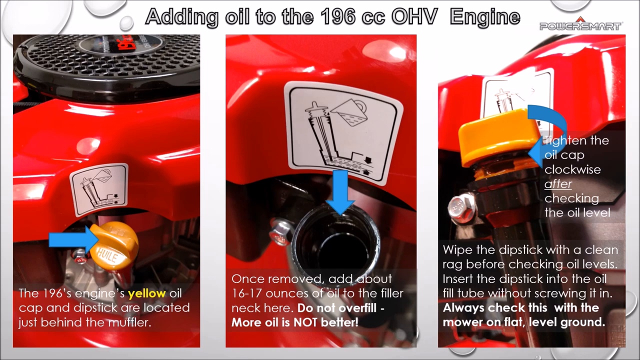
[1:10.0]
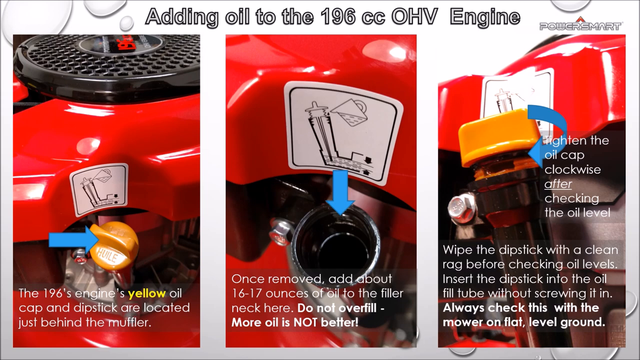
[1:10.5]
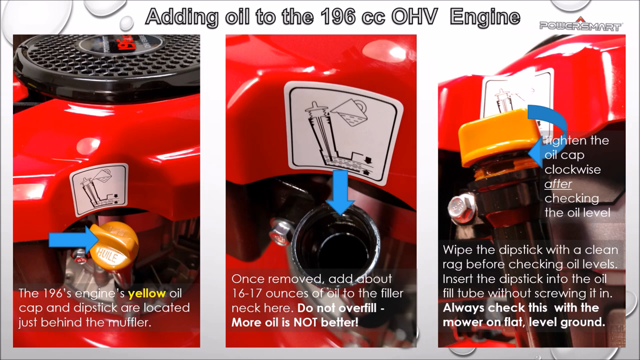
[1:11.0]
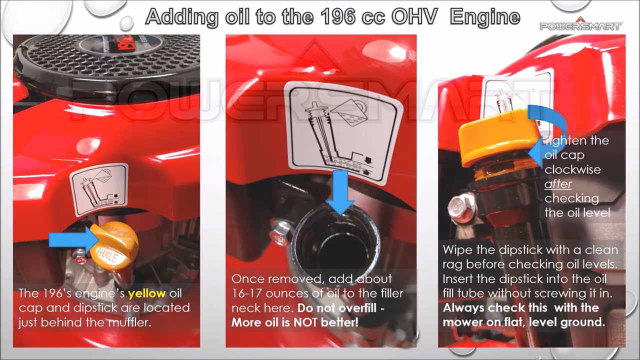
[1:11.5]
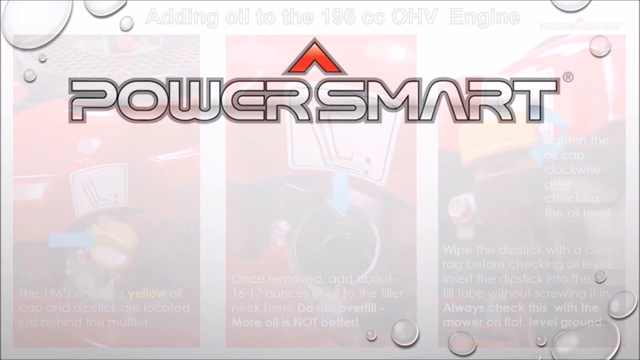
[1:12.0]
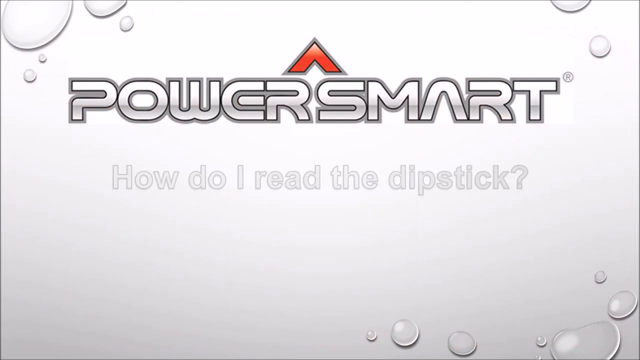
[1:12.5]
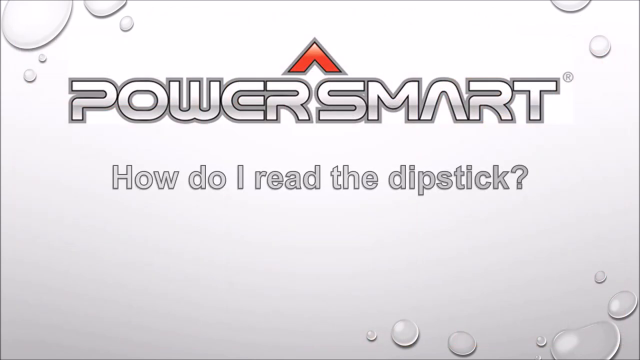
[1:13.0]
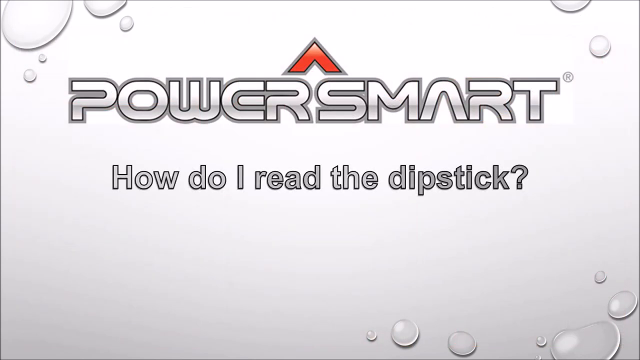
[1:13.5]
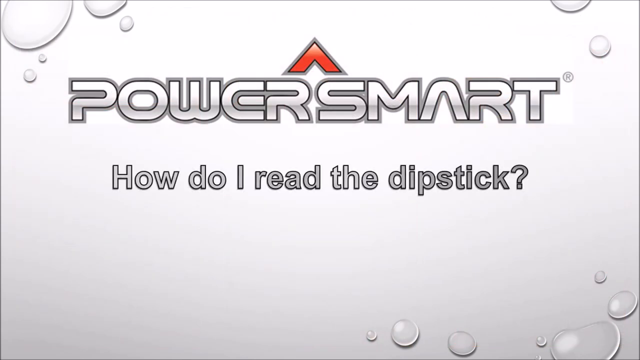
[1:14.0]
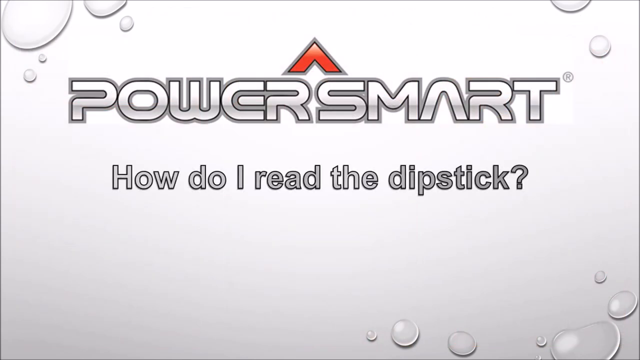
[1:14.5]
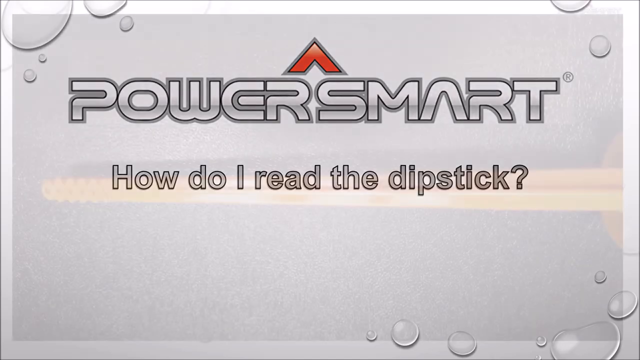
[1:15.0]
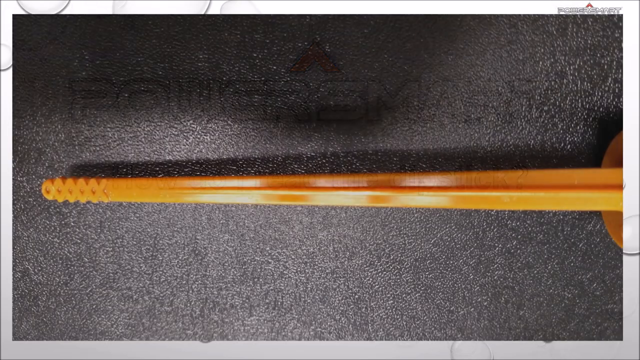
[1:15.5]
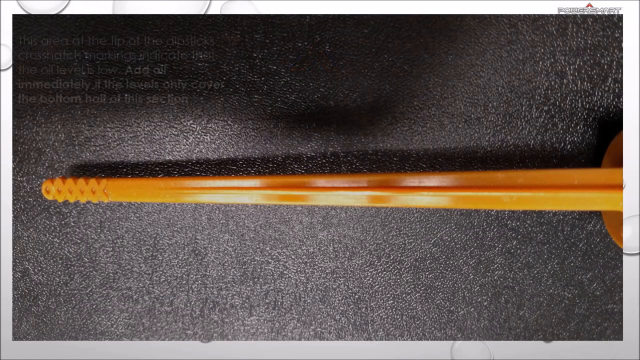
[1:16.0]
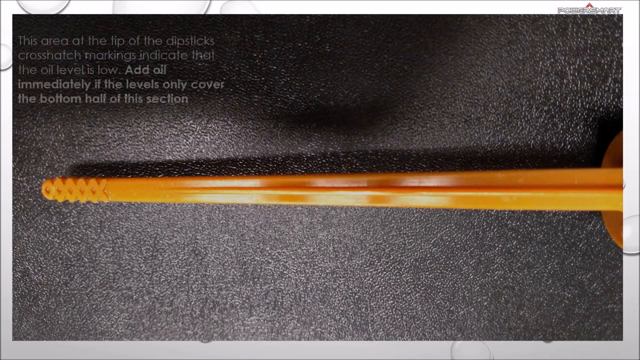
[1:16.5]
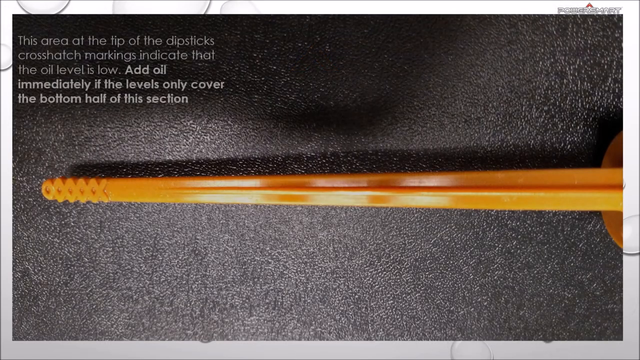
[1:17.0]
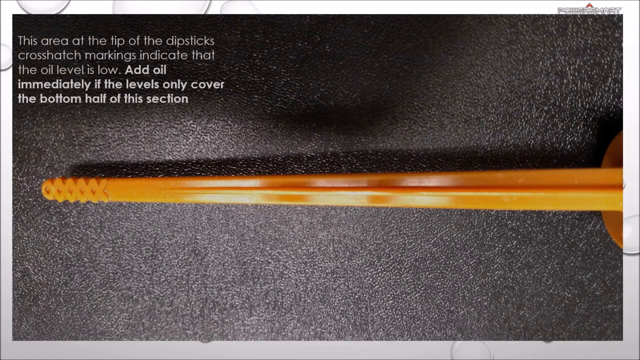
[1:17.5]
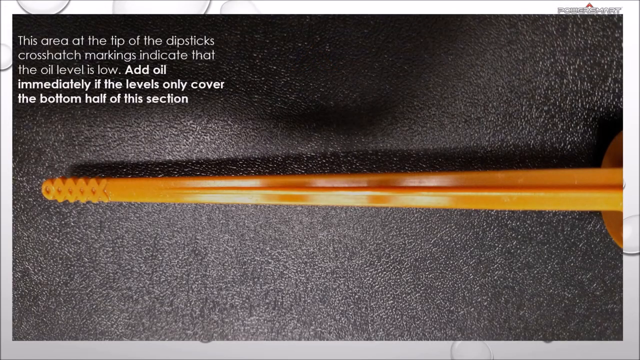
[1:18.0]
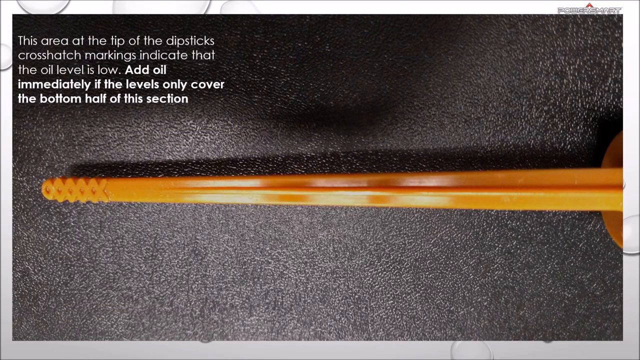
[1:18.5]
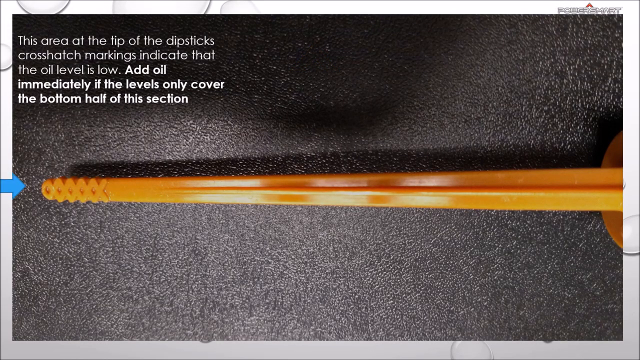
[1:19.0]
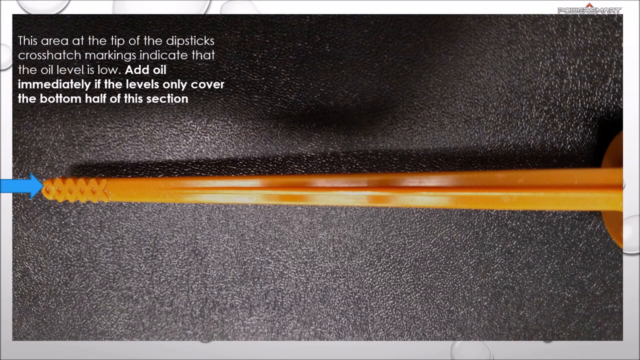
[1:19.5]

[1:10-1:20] A transition leads to the PowerSmart logo with a red triangle on top, on the white background with white bubbles around it. The words below the logo say "How do I read the dipstick?" The scene then changes to an orange dipstick on a rough black surface, with the PowerSmart logo at the top right. At the top left the words "this area at the tip of the dipstick's crosshatch mark indicates the oil level is low. Add oil immediately if the levels only cover the bottom half of the section" appear. A blue arrow comes from the left side of the video, pointing at the tip of the dipstick.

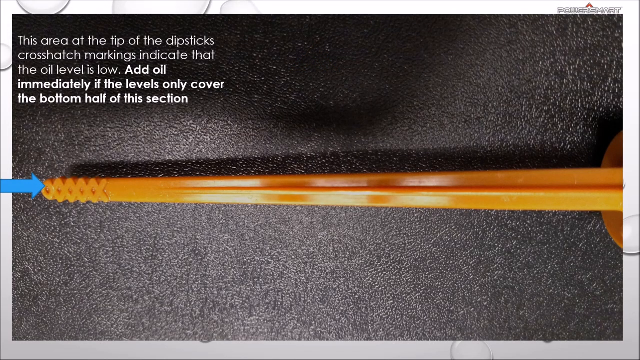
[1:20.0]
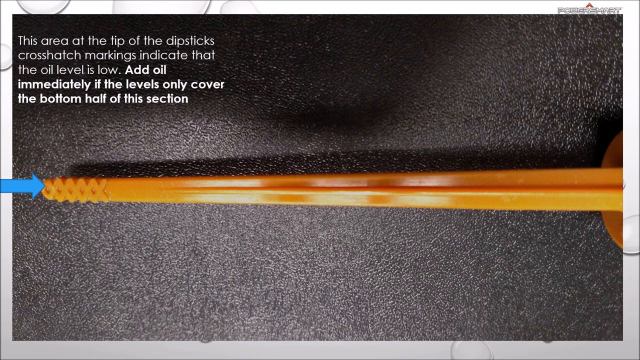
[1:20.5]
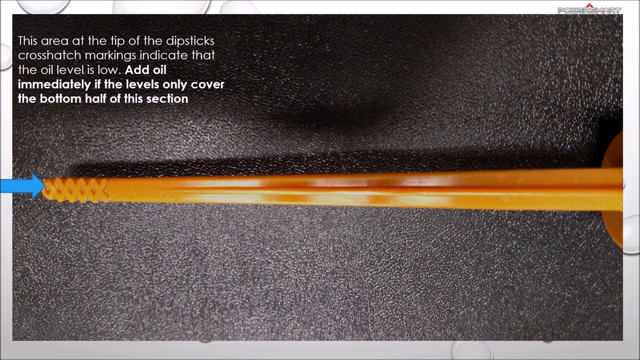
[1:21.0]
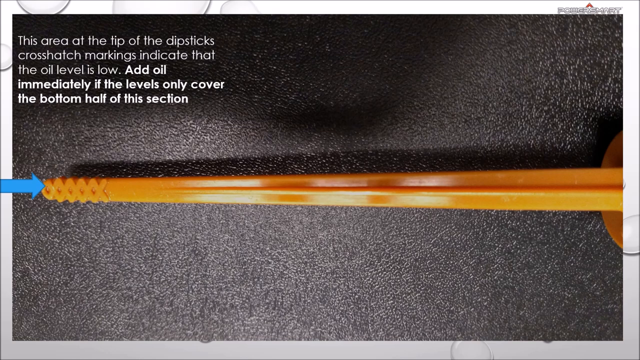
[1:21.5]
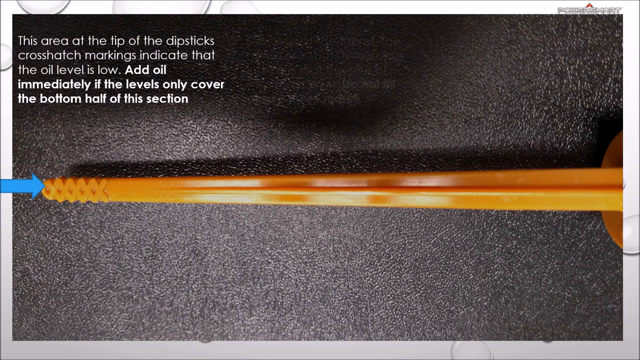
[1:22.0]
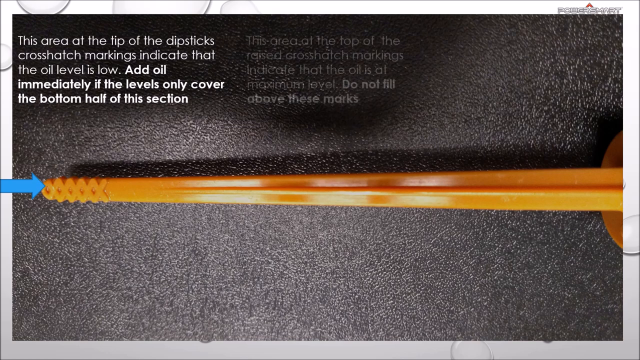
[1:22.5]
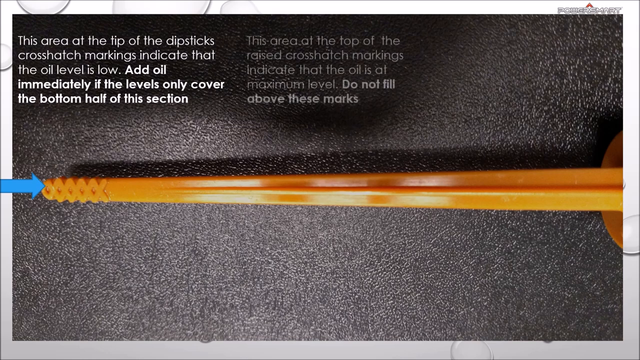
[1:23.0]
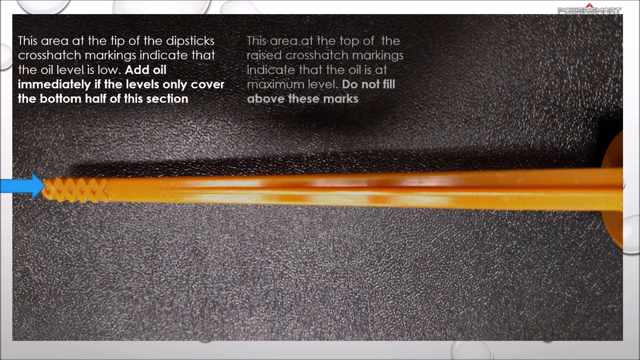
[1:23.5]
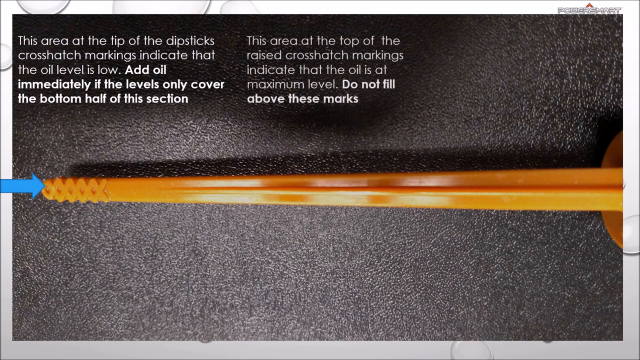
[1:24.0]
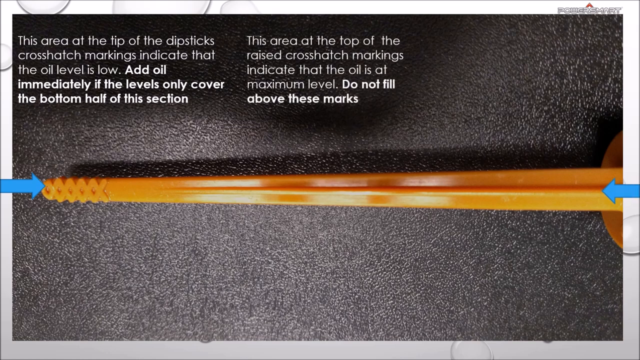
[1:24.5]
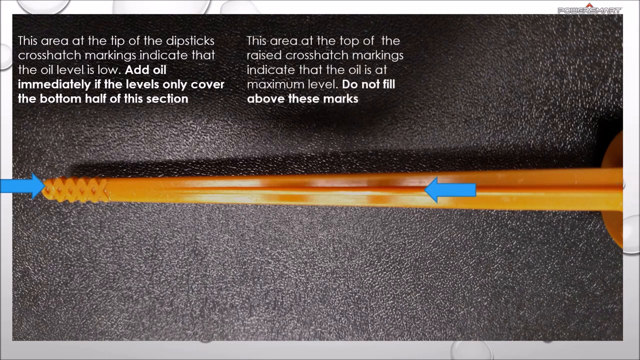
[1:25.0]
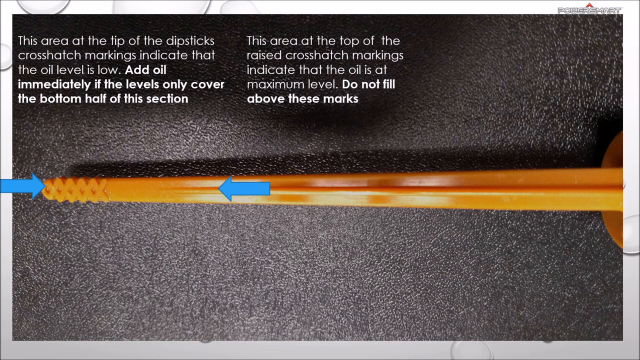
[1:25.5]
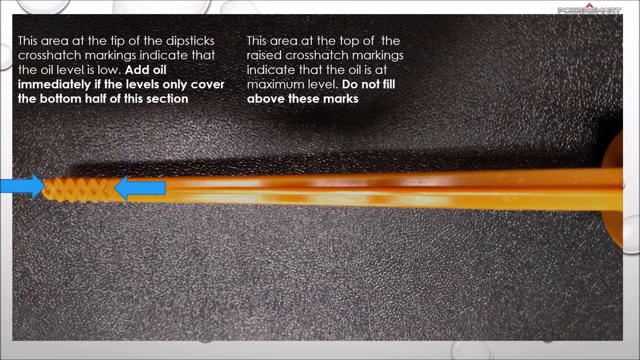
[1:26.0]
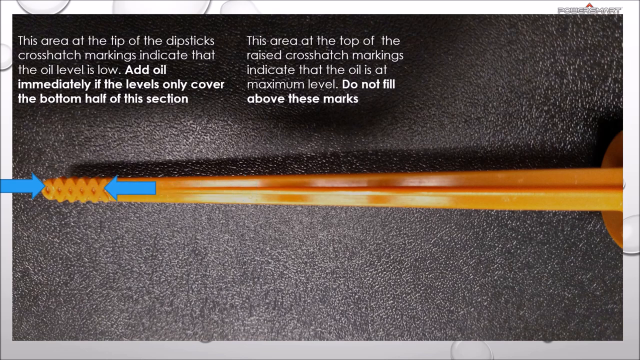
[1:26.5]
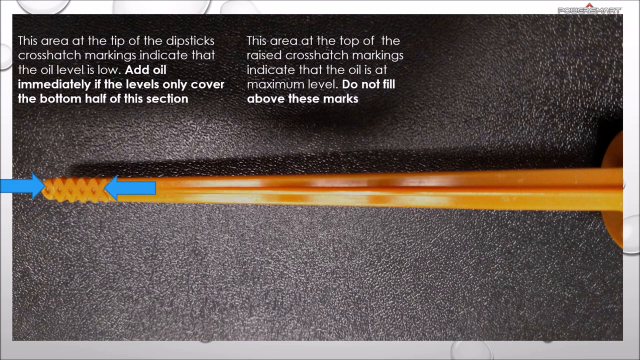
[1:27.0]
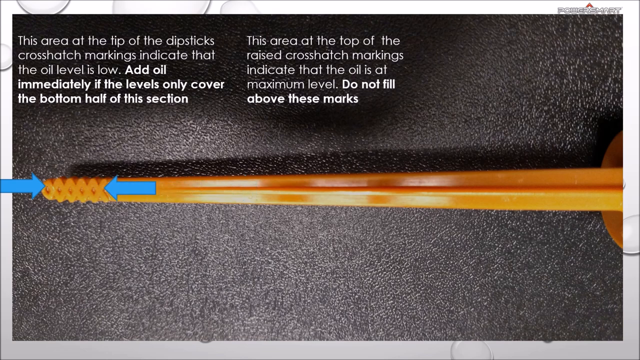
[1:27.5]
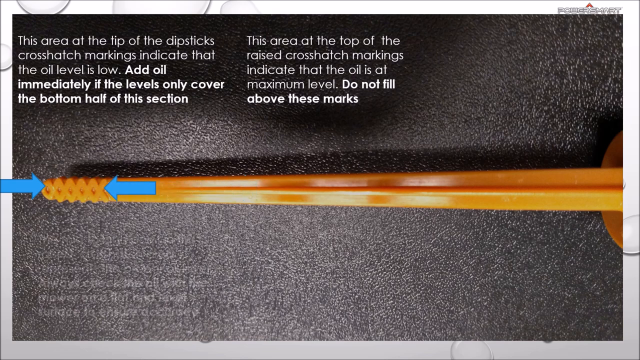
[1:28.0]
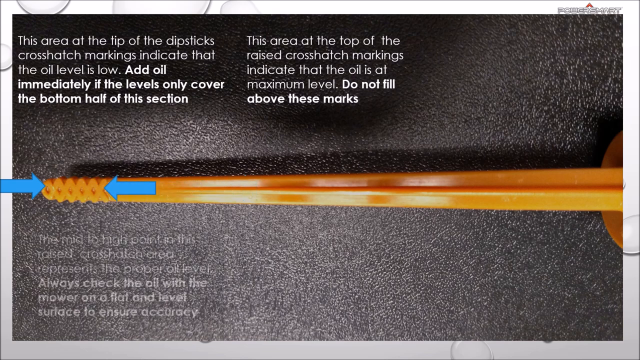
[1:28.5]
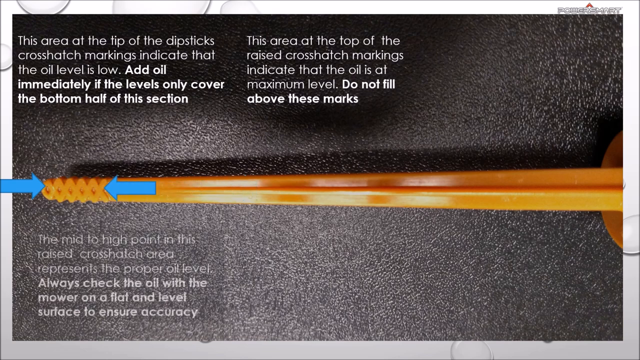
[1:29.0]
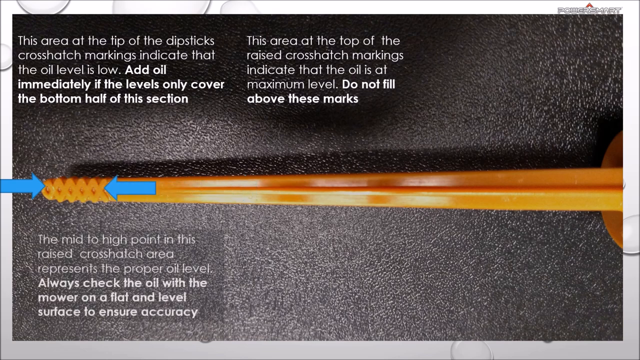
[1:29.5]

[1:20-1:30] The orange dipstick is on a black surface, with a blue arrow pointing at its tip and instructions at the top left explaining what that indicates. At the top middle of the video the words "this area at the top of the raised crosshatch markings indicate that the oil is at maximum level. Do not fill above those marks" fade in. A blue arrow comes in from the right side of the screen and indicates the points. Words then appear at the bottom left: "the mid to high point in this raised crosshatch area represents the proper oil level. Always check the oil with the mower on a flat and level surface to ensure accuracy".